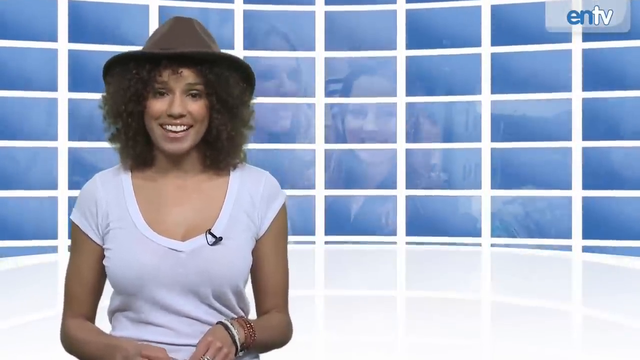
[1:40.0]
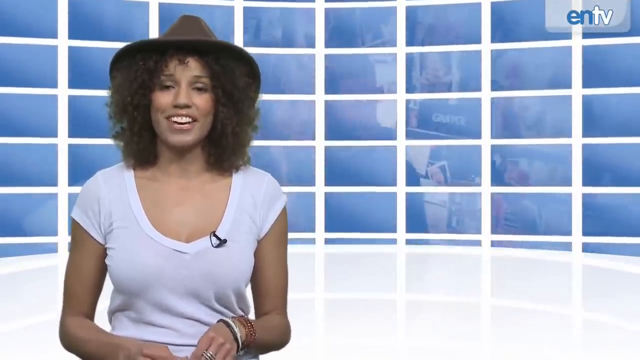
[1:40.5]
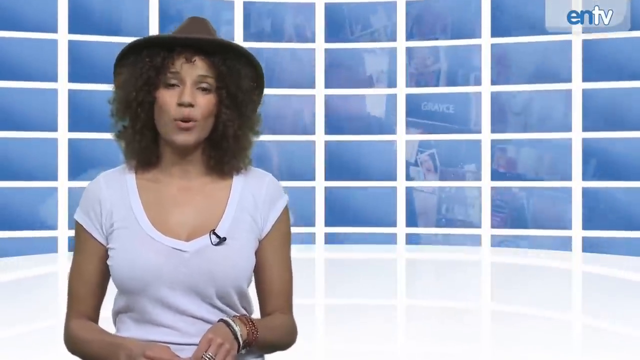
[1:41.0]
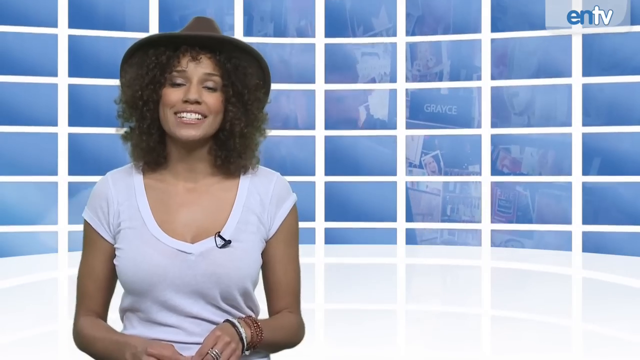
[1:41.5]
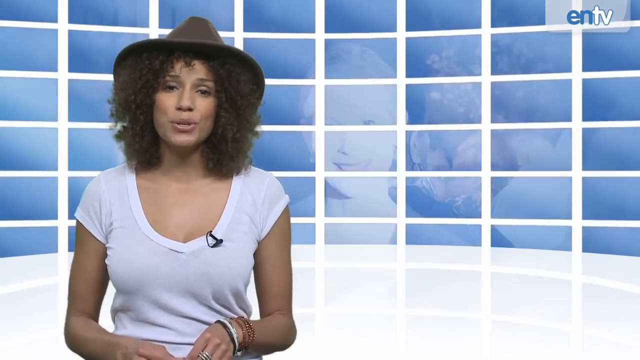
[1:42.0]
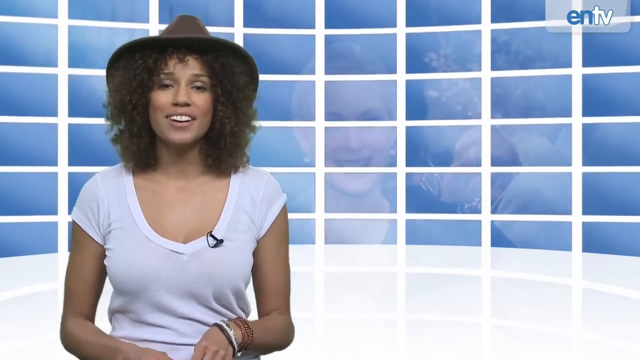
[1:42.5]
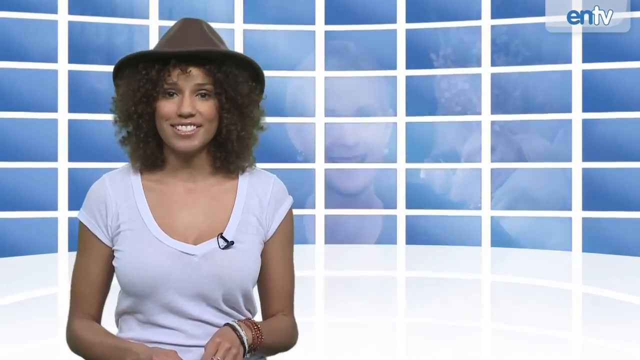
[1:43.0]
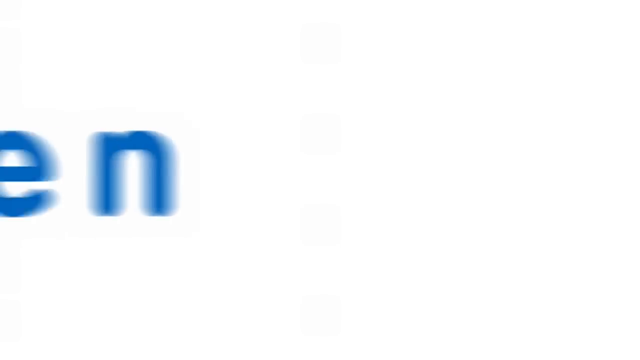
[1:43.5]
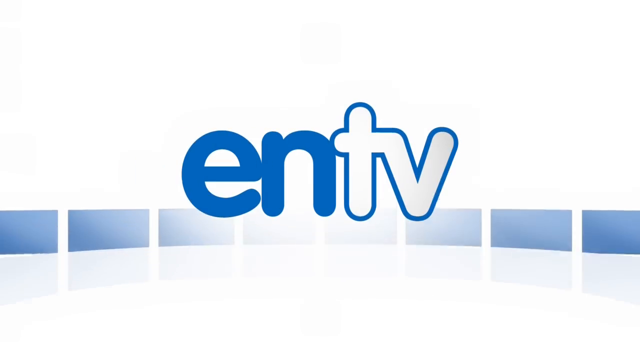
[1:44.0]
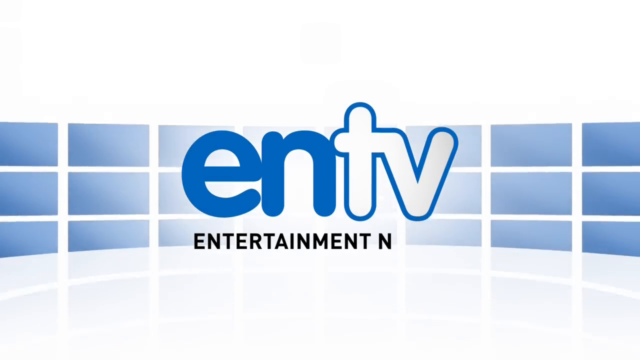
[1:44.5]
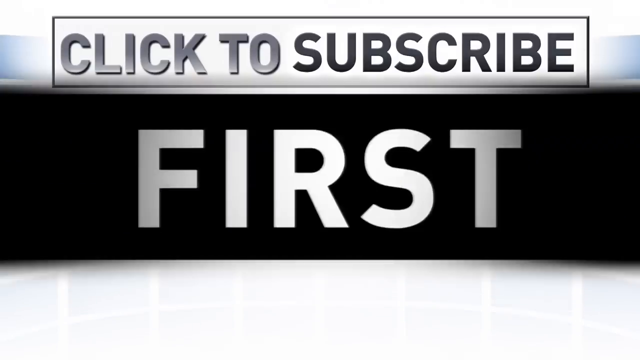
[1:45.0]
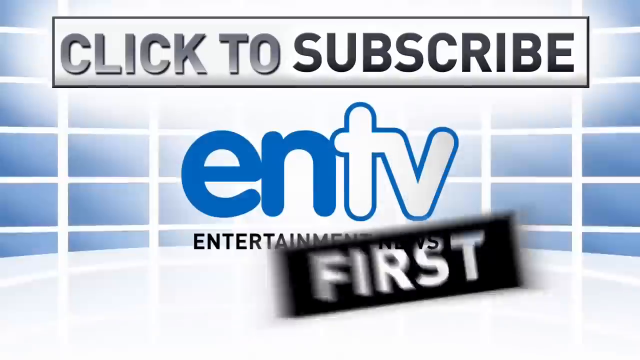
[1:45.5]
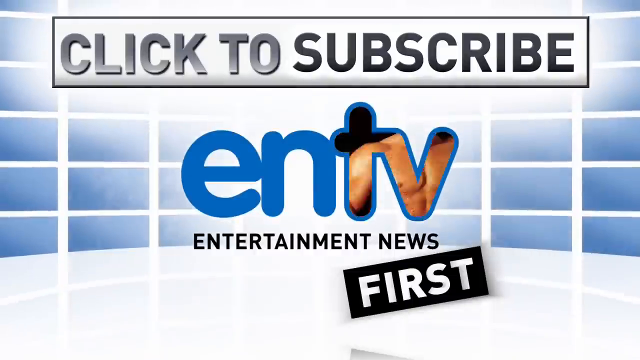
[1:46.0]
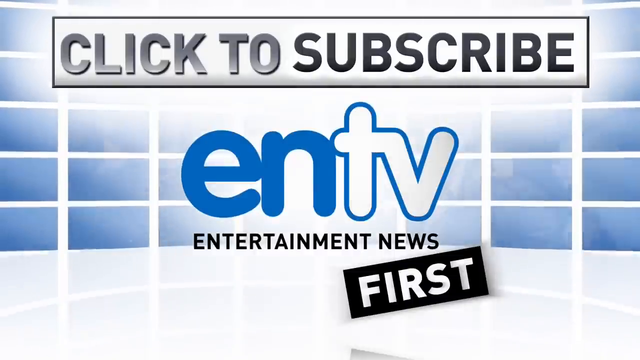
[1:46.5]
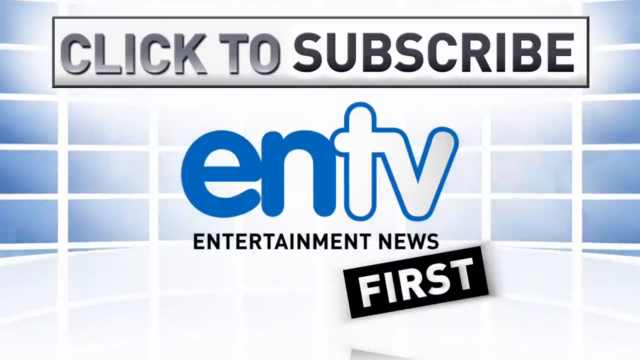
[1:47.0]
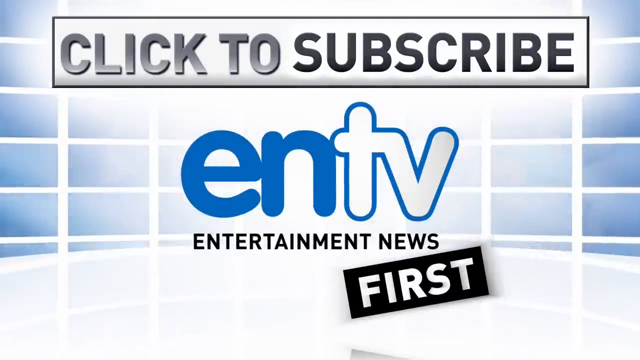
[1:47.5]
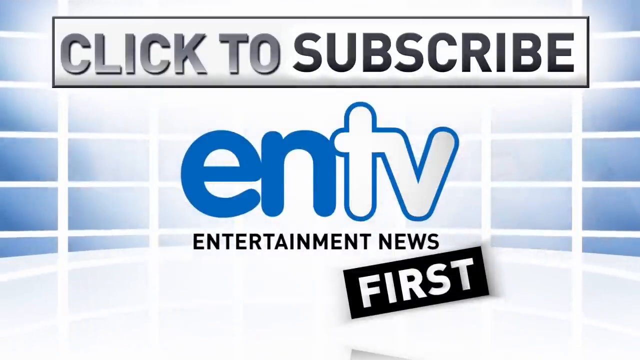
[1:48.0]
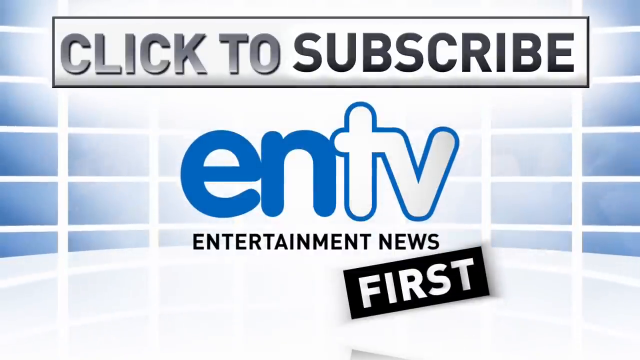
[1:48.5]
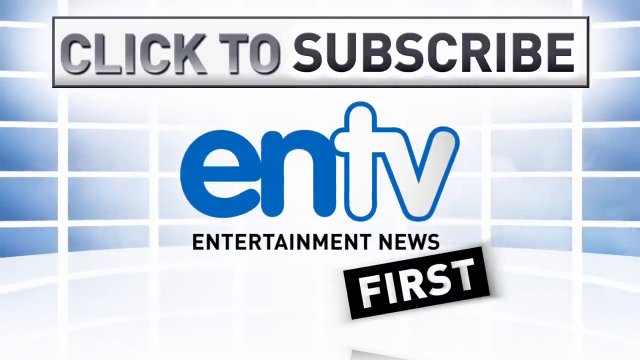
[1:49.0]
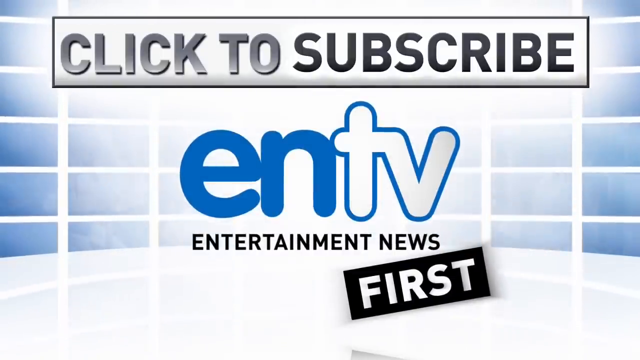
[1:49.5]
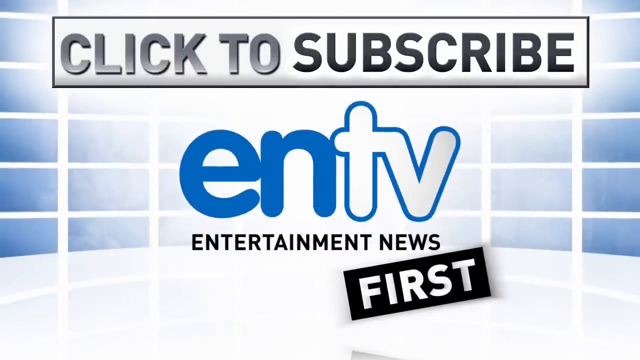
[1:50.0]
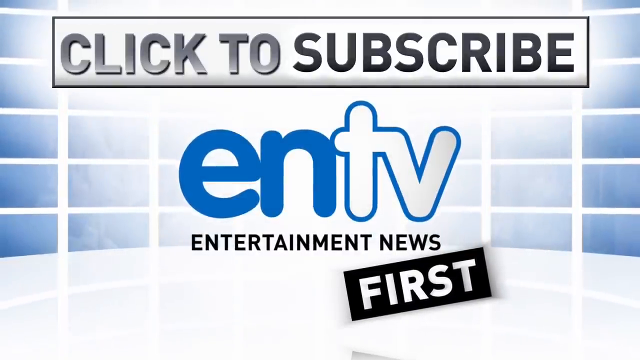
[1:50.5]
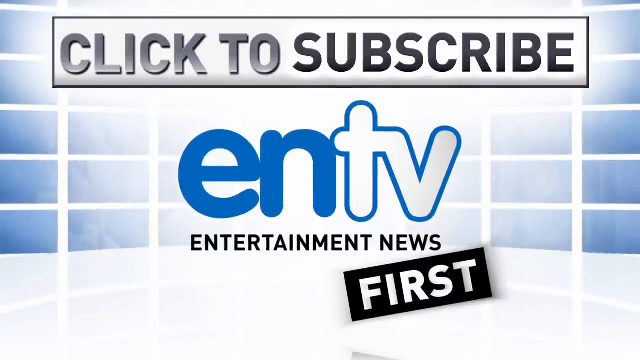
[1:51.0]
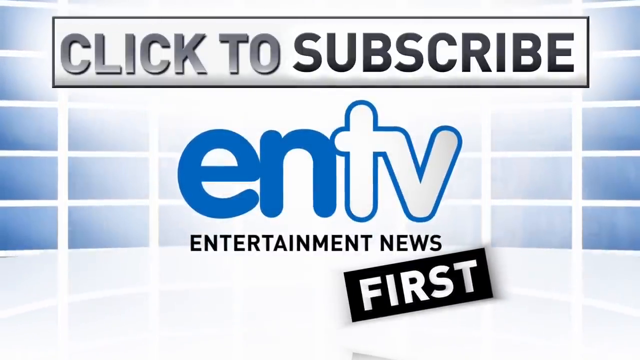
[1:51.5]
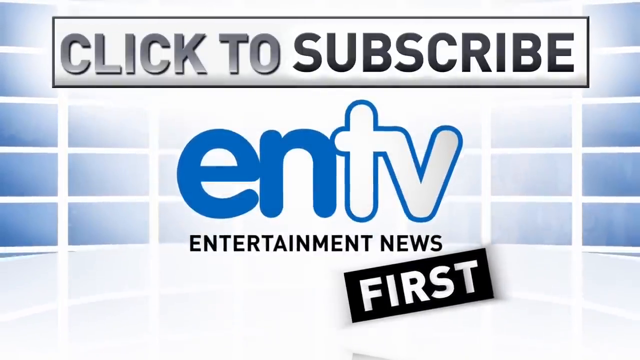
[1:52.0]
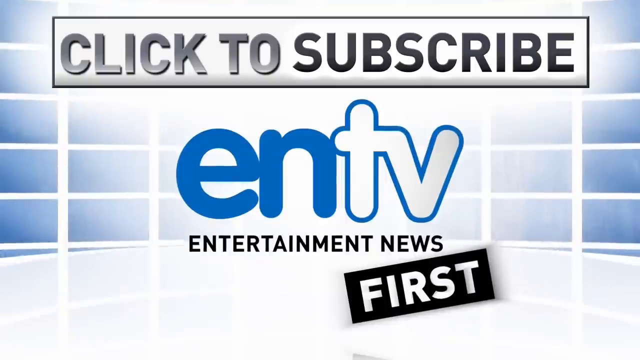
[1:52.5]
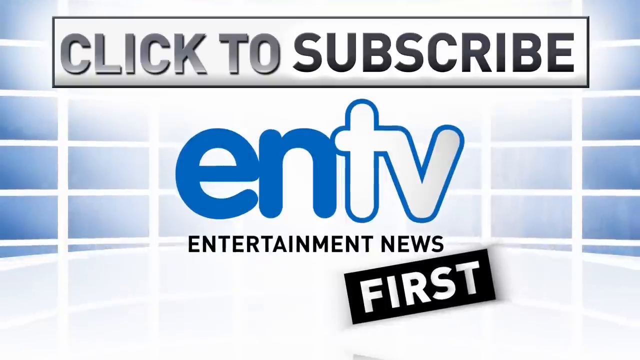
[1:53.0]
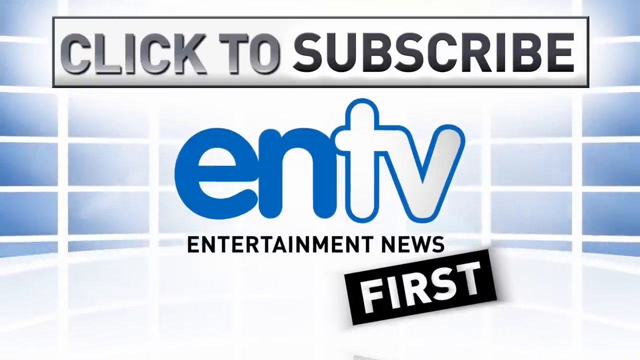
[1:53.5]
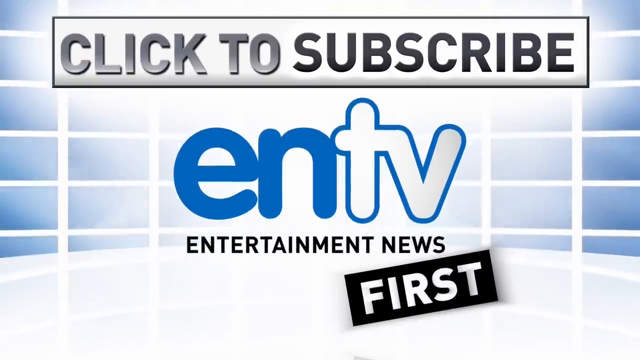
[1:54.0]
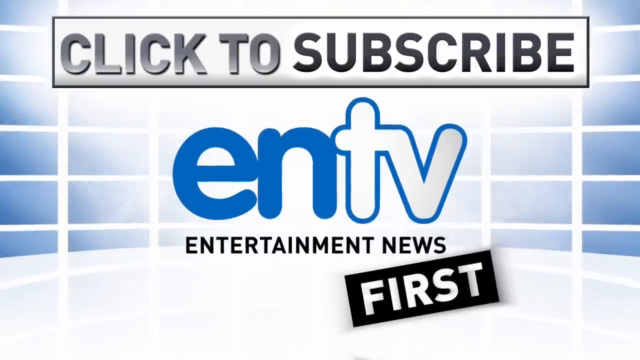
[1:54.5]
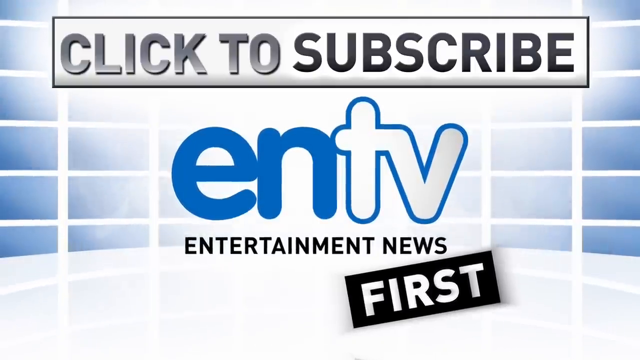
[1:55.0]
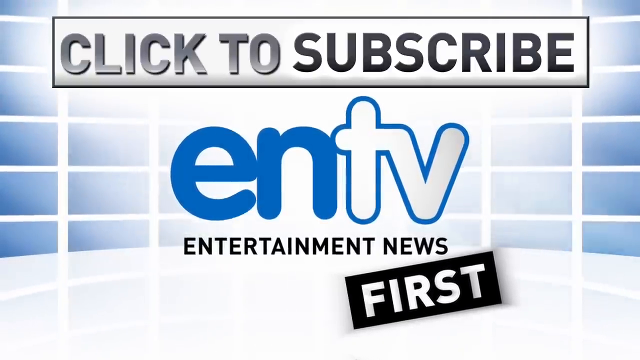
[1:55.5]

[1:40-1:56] The woman continues speaking to camera. In the background behind her, video footage of a red carpet is kind of palely projected onto blue squares. The video cuts to a logo that reads "ENTV Entertainment News". A pop-up reads "first", and then a text box reads "click to subscribe ENTV Entertainment News first".